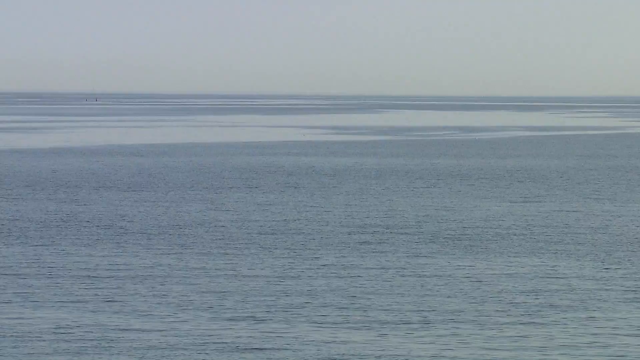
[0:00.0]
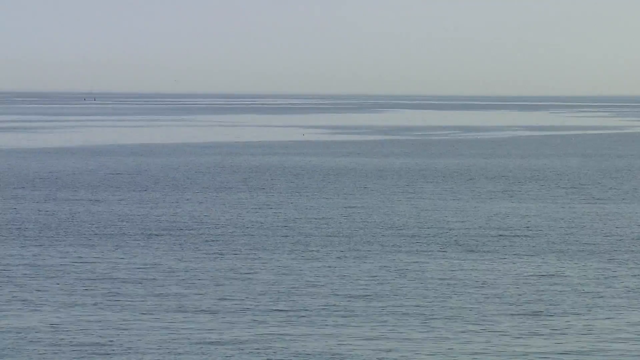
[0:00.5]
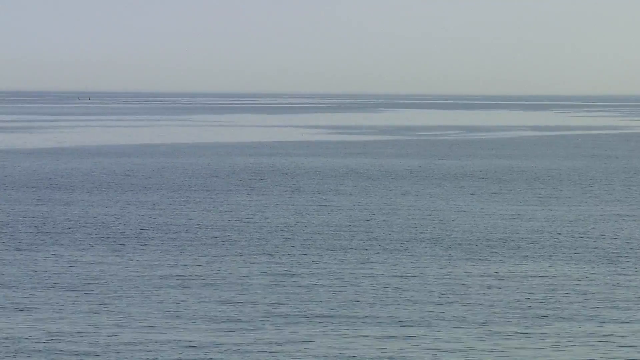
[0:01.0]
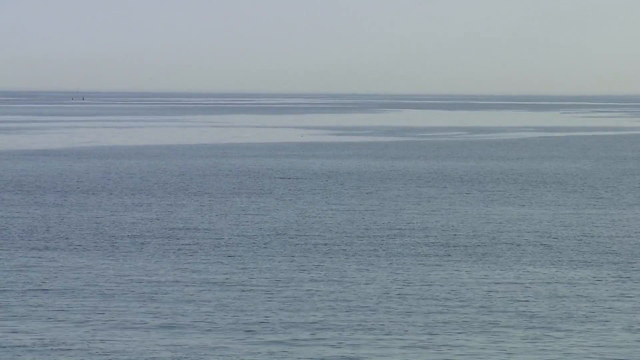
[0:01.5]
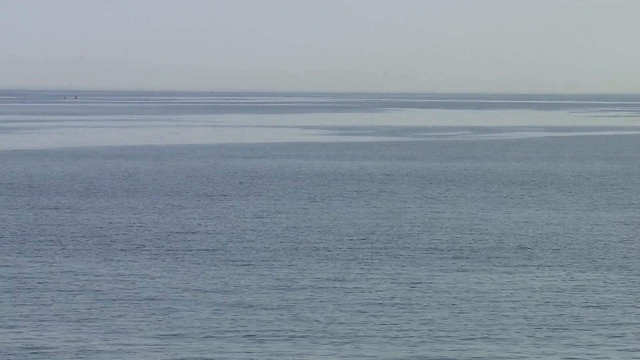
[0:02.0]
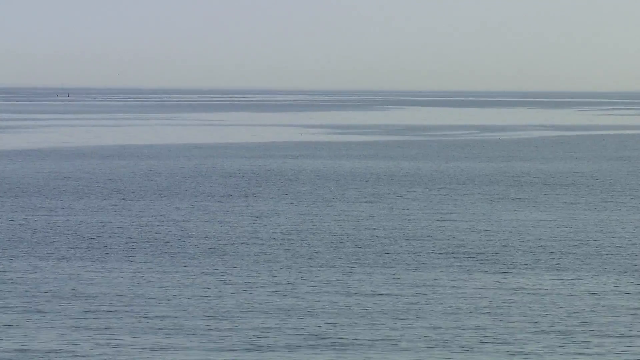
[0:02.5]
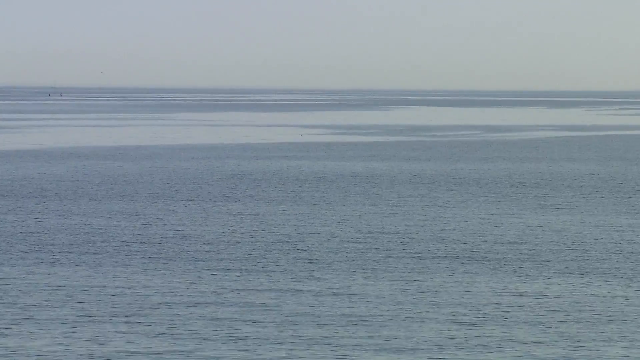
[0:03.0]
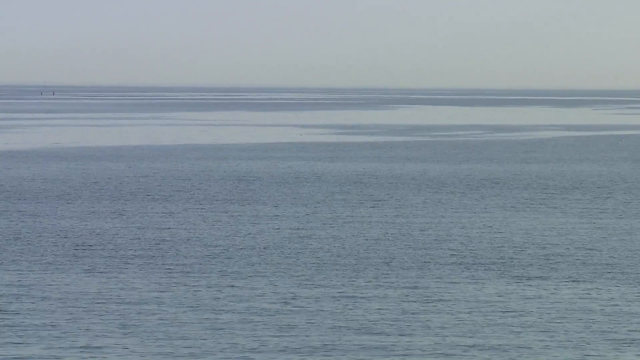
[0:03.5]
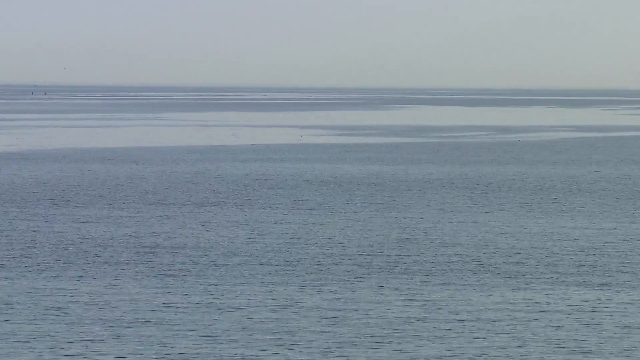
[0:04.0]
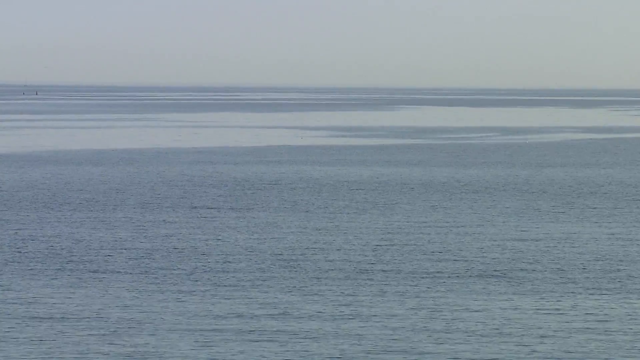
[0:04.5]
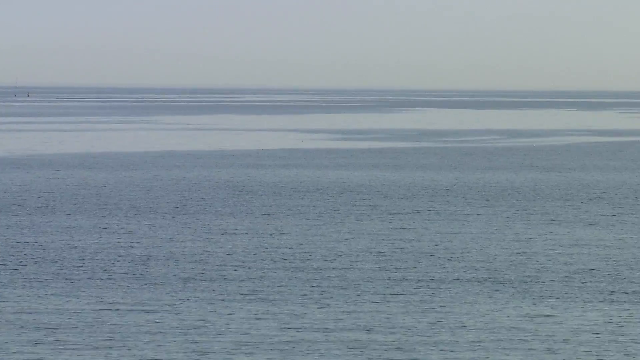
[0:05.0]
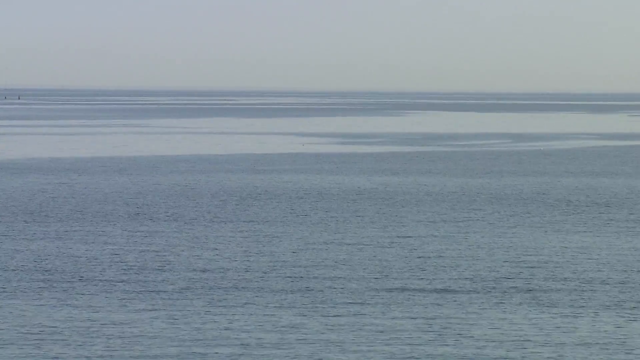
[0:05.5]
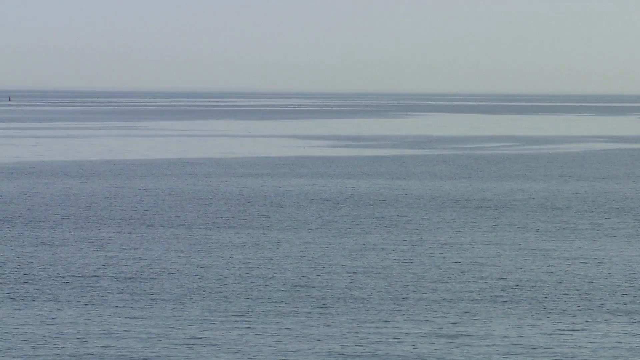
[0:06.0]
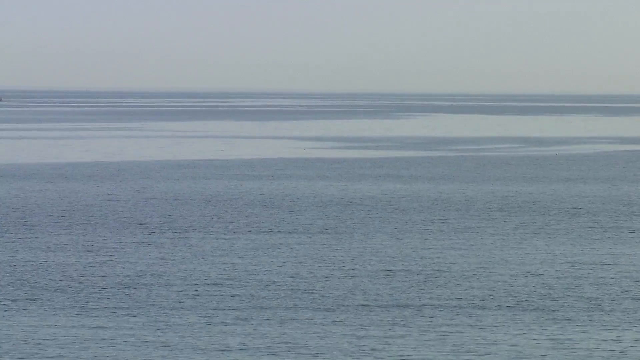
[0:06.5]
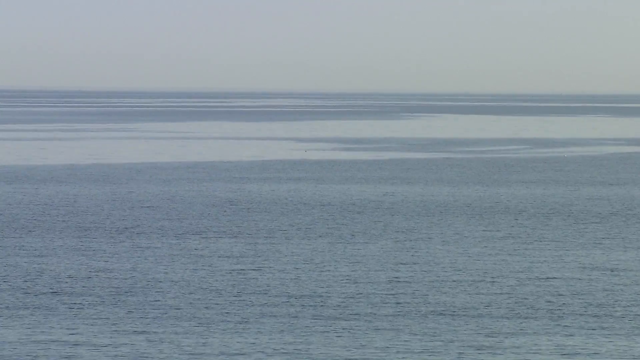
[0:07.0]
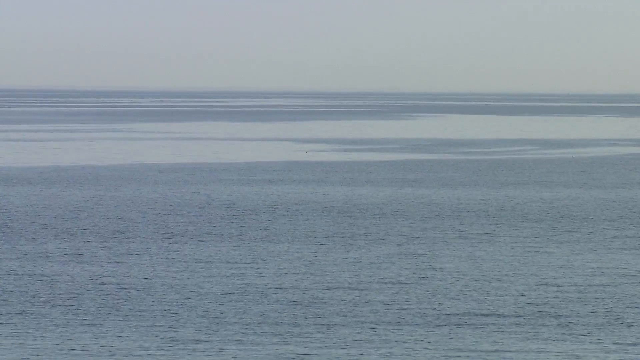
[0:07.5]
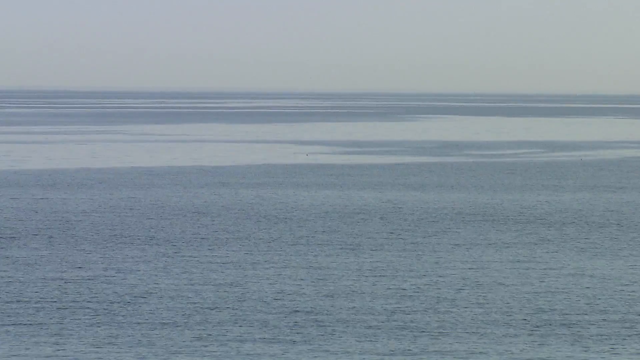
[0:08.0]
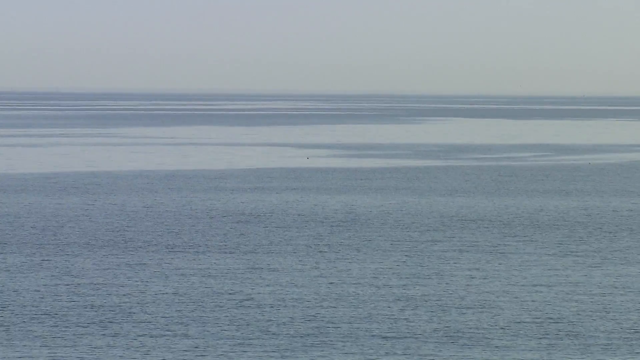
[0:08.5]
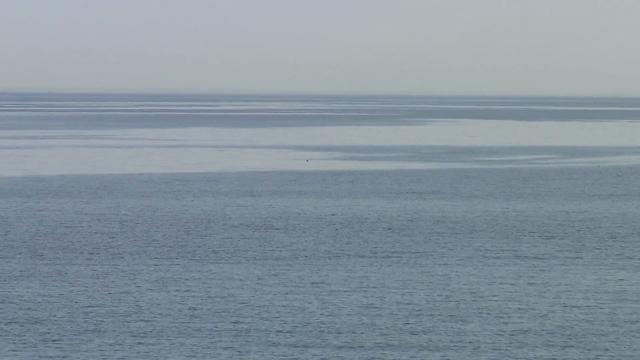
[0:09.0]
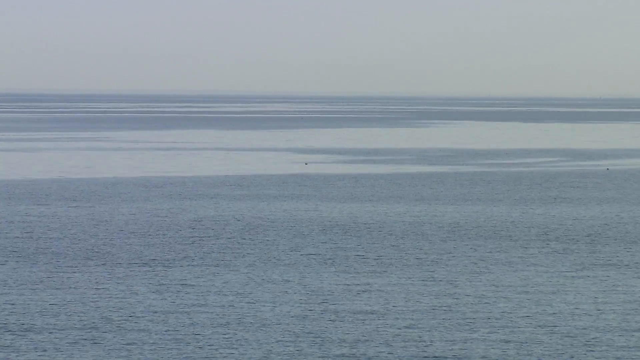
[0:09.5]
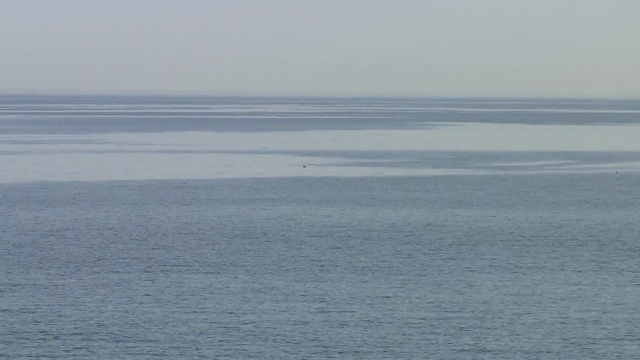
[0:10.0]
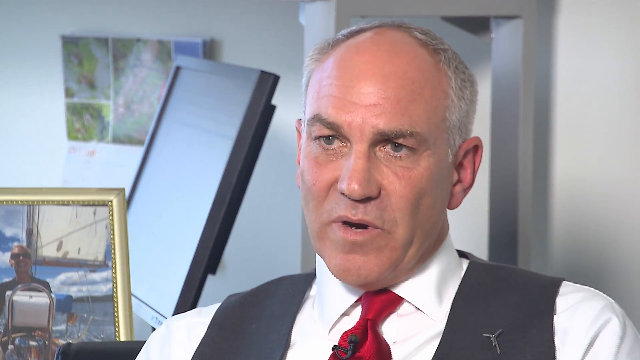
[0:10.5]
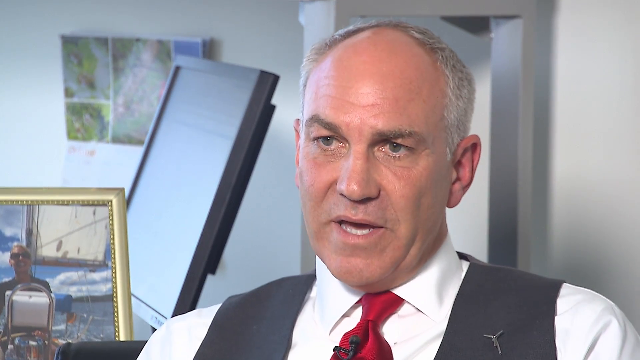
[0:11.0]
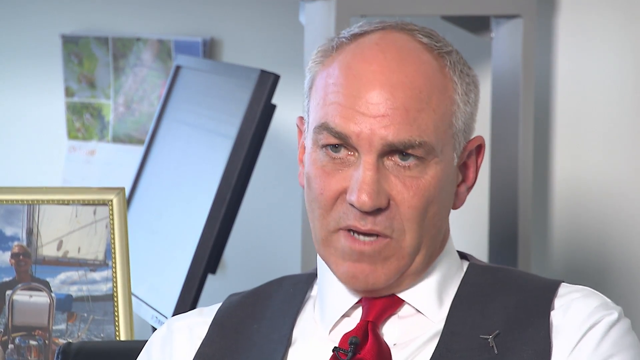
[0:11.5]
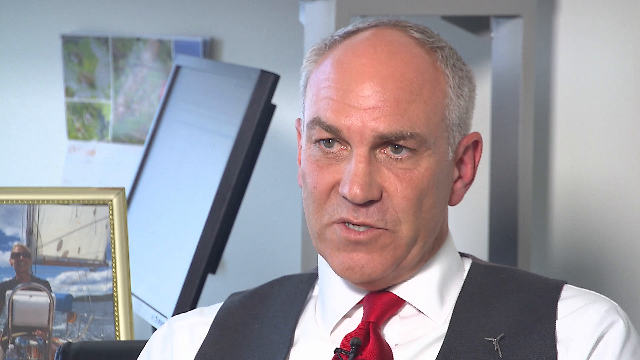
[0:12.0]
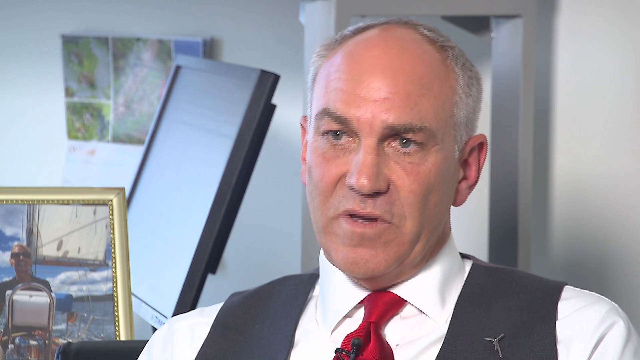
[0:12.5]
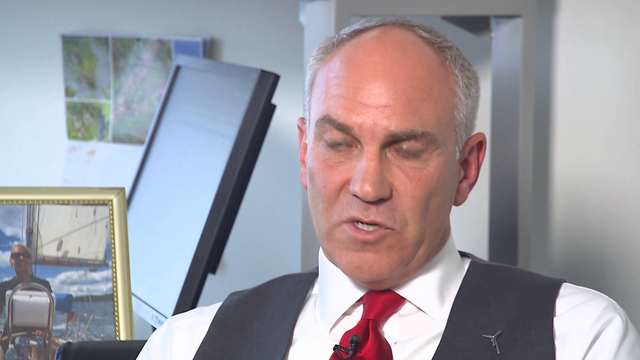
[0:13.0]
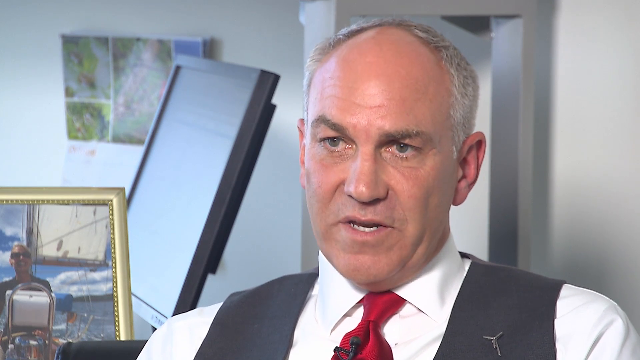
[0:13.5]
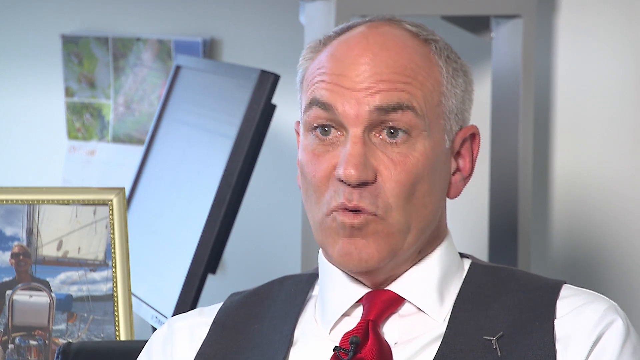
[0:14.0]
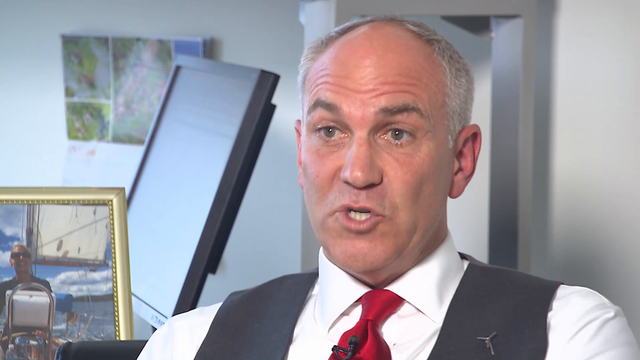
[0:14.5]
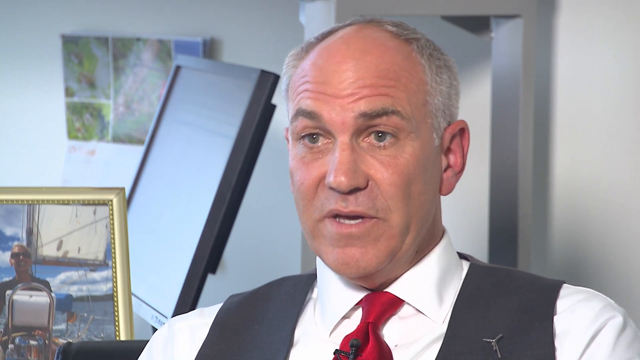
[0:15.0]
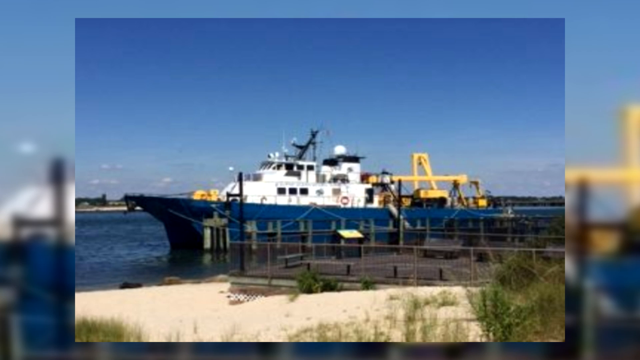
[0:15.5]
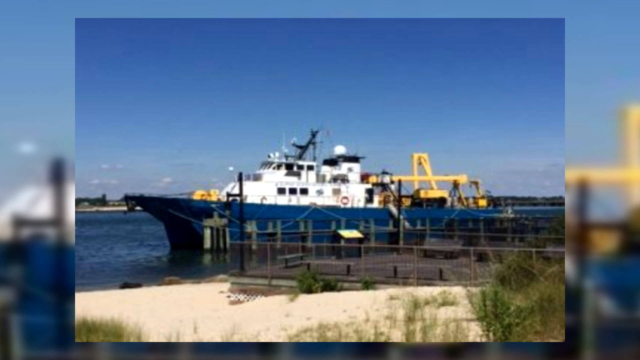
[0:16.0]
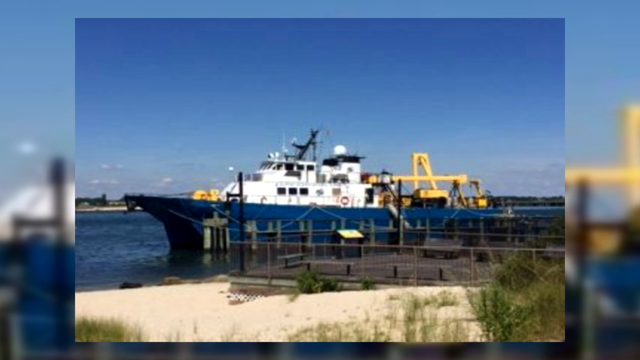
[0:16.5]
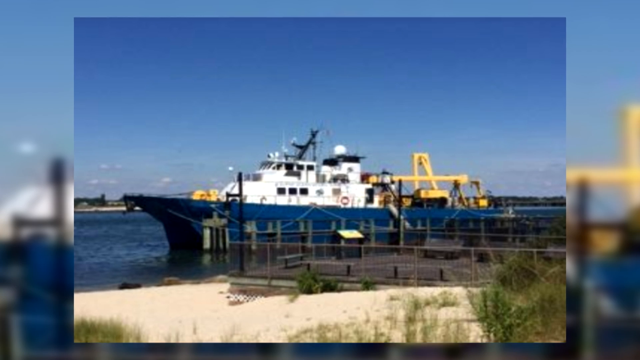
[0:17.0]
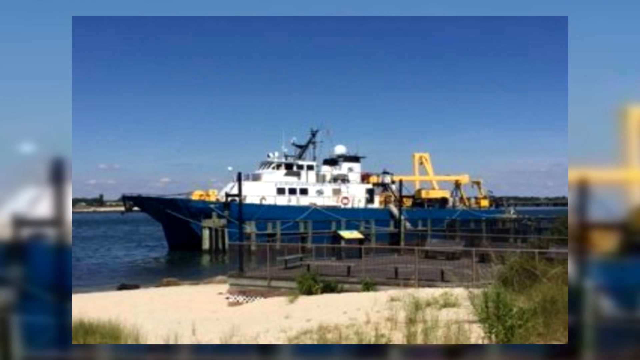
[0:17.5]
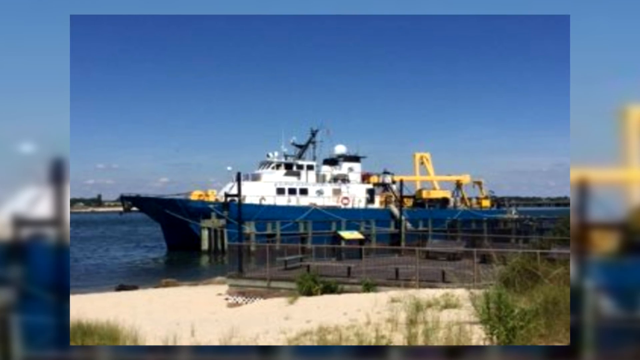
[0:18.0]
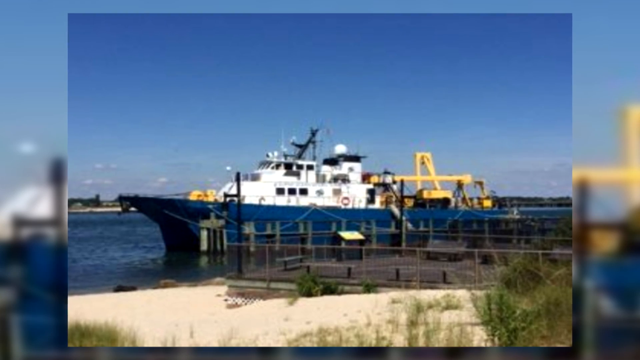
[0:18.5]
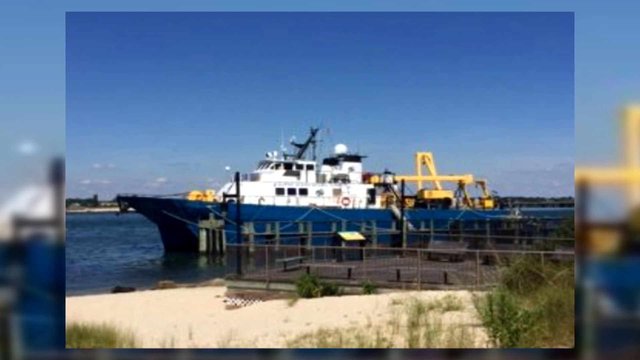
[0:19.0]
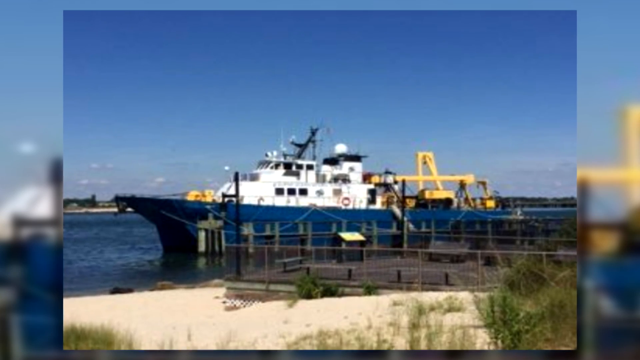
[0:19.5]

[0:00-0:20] A slow zoom moves over a stretch of water. The water in the foreground has some ripples, while in the distance there is something almost like a pool that is completely still and very calm. The footage then changes to a balding, grey-haired man talking to the camera. He wears a white shirt with a red tie and a grey waistcoat. Behind him, a map showing several different territories is pinned to a wall, hanging slightly loose at one end, and beyond that is what appears to be a laptop computer; it is not possible to see whether it is switched on. In the bottom left corner of the screen is something like a framed picture, apparently of a lady on a sunny day. The footage then changes to a boat moored at a dock. The boat is blue and white and seems to have a yellow device on its rear that might be a crane or something similar.